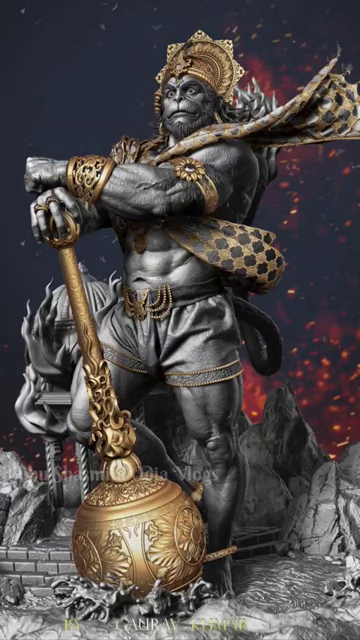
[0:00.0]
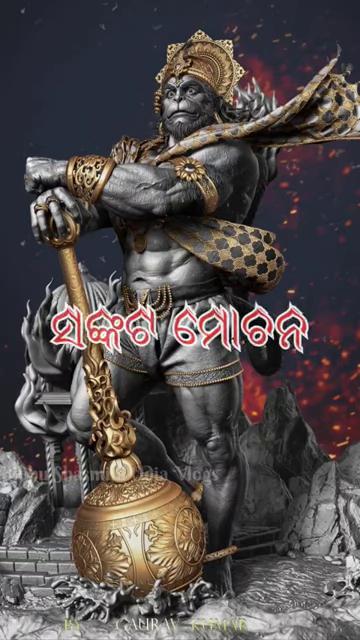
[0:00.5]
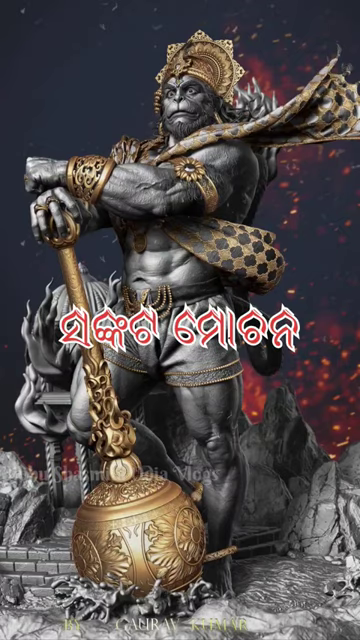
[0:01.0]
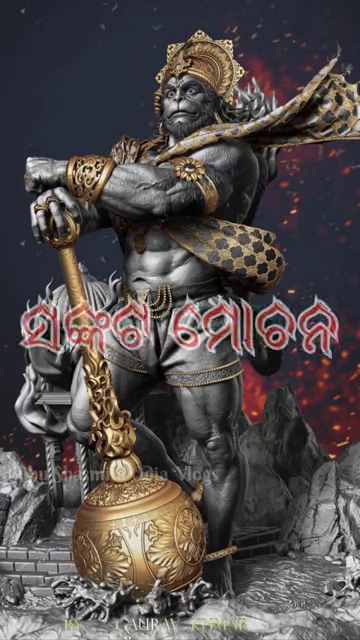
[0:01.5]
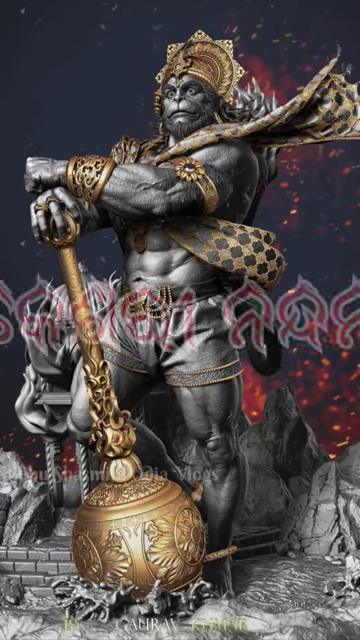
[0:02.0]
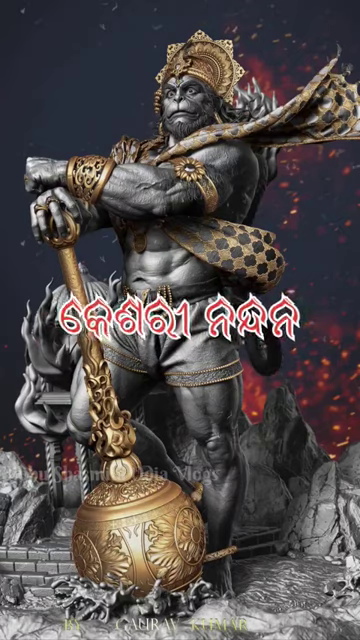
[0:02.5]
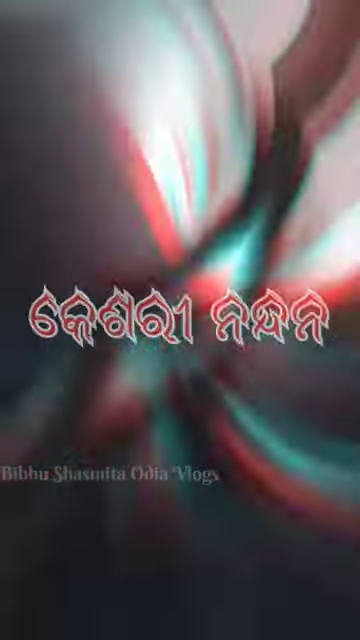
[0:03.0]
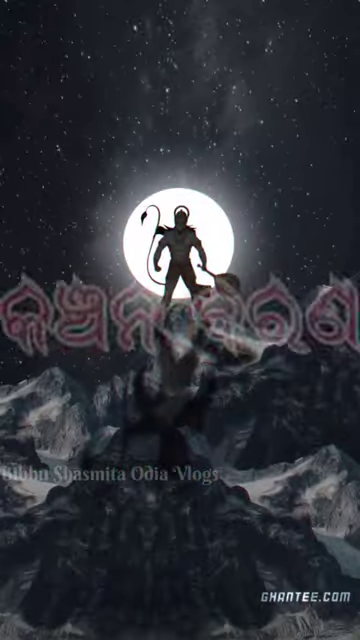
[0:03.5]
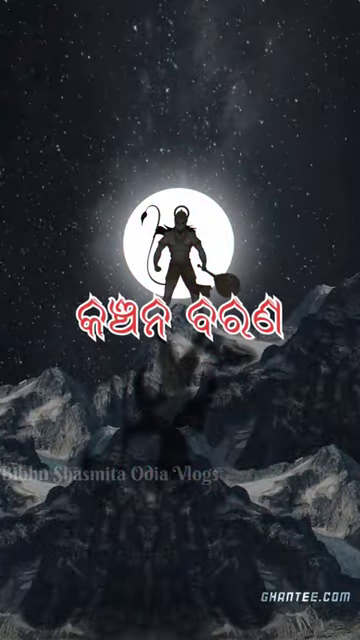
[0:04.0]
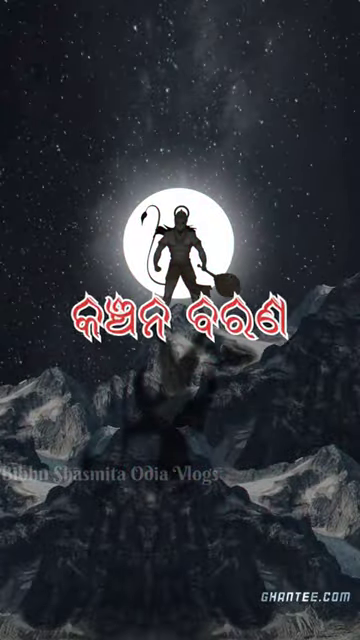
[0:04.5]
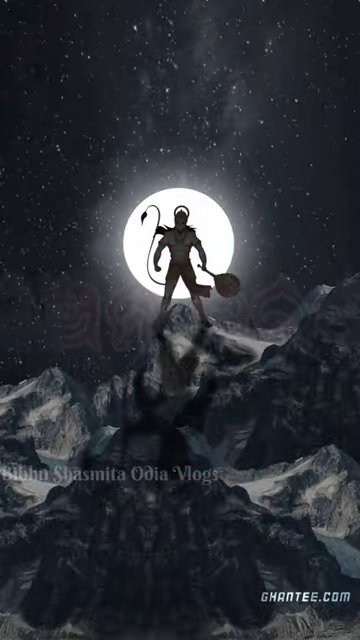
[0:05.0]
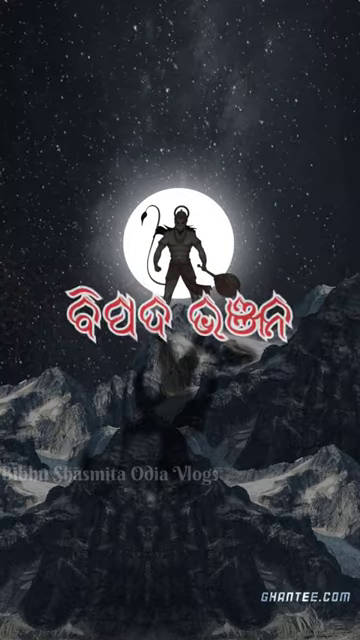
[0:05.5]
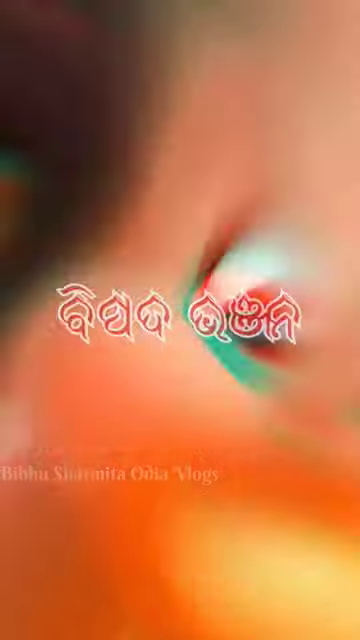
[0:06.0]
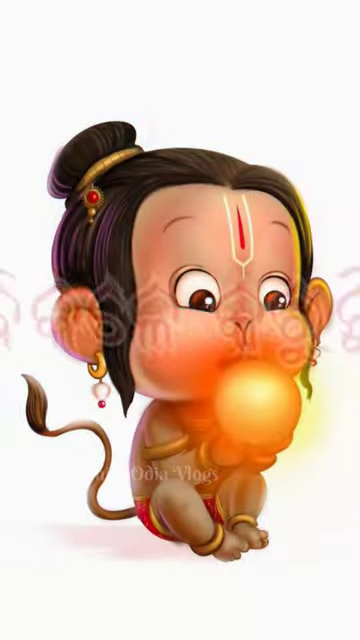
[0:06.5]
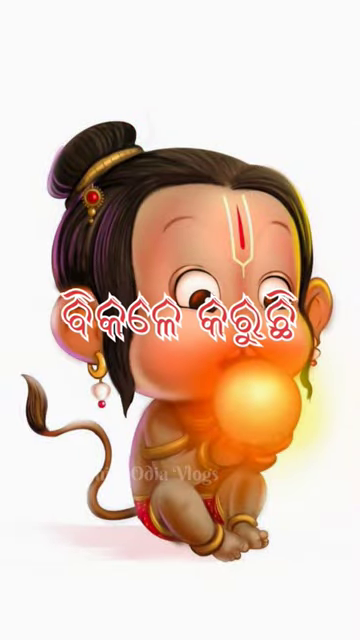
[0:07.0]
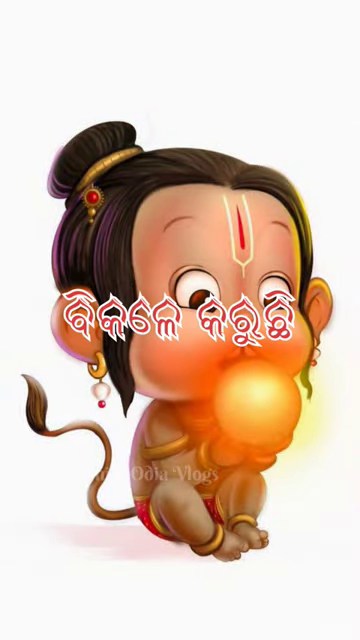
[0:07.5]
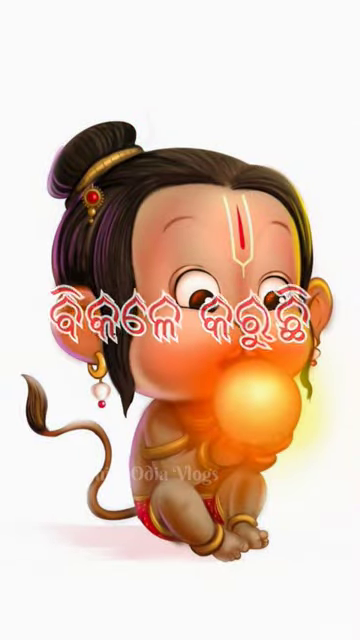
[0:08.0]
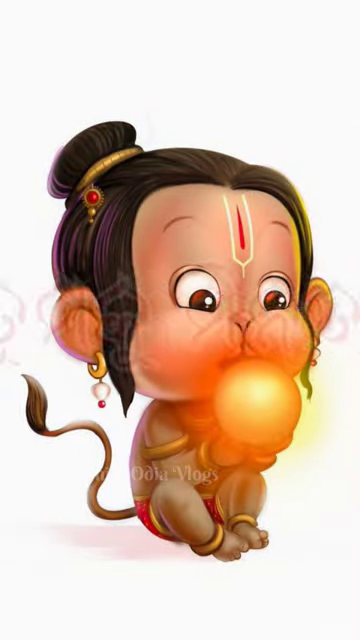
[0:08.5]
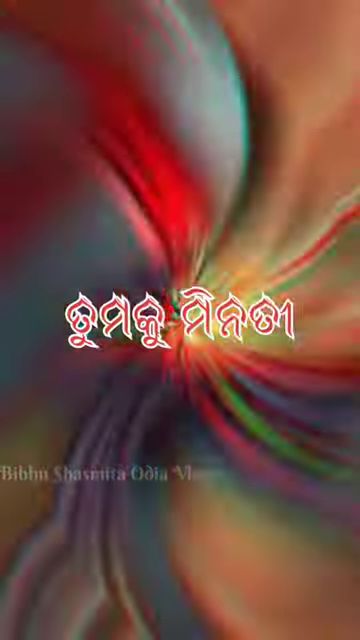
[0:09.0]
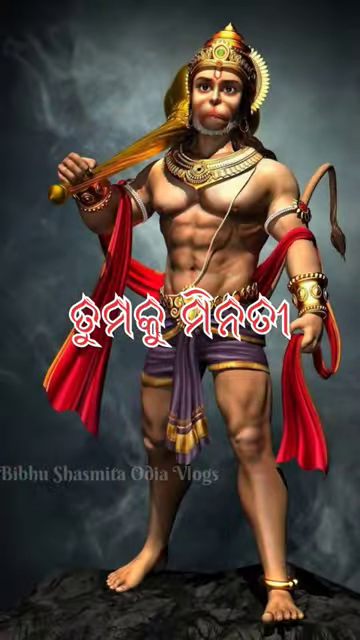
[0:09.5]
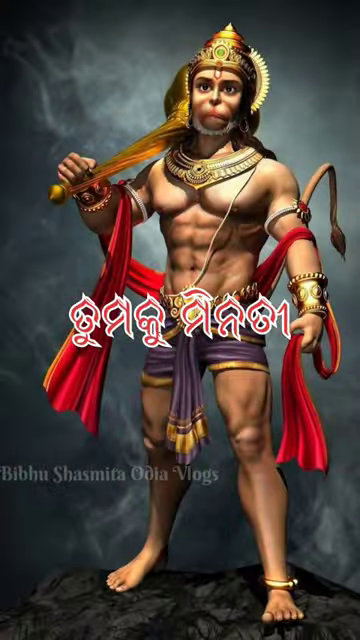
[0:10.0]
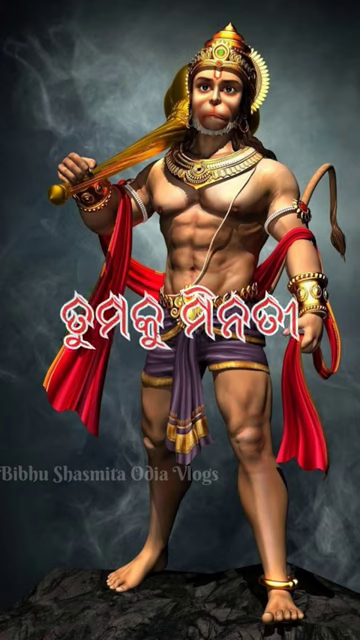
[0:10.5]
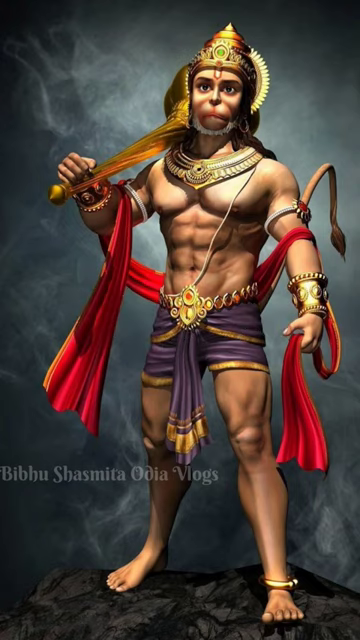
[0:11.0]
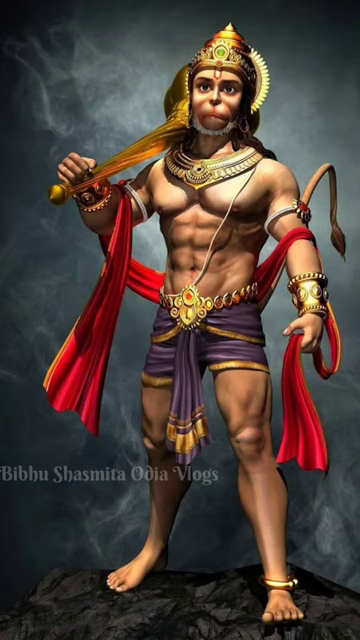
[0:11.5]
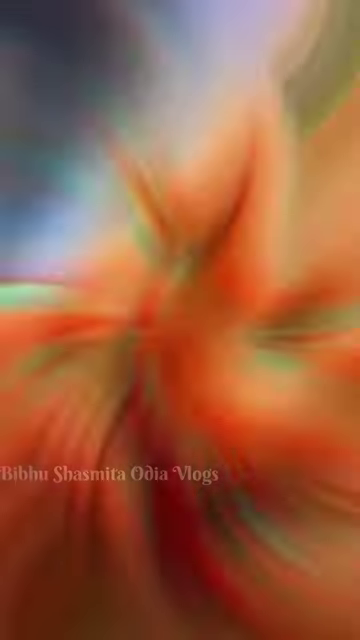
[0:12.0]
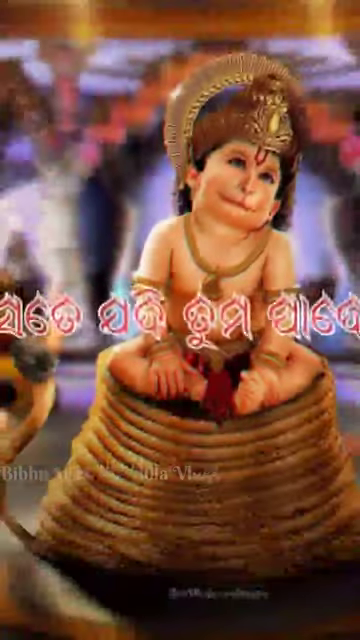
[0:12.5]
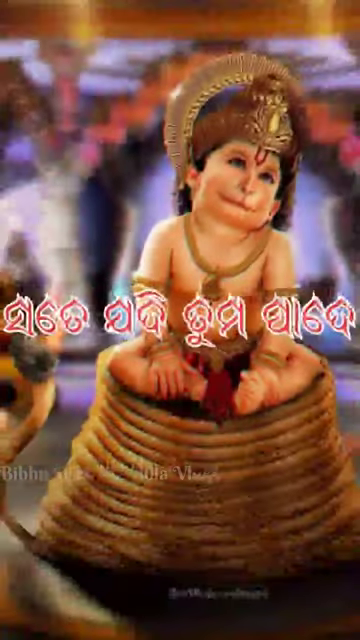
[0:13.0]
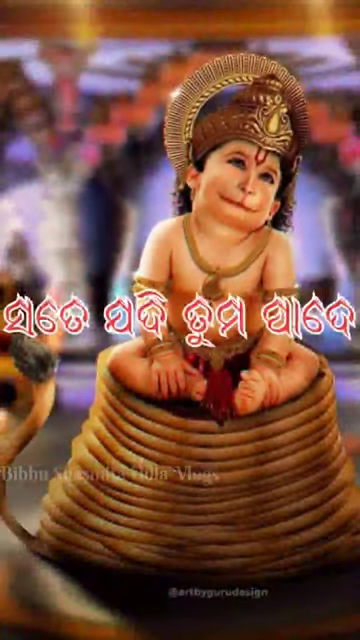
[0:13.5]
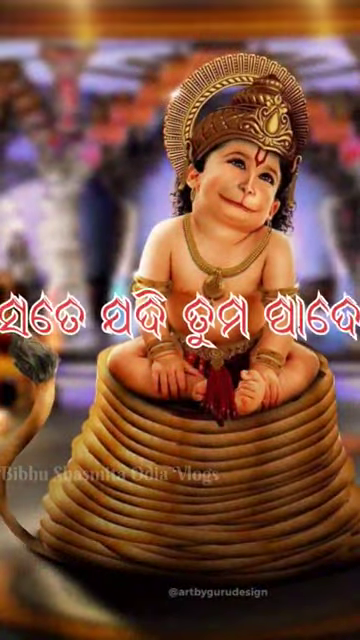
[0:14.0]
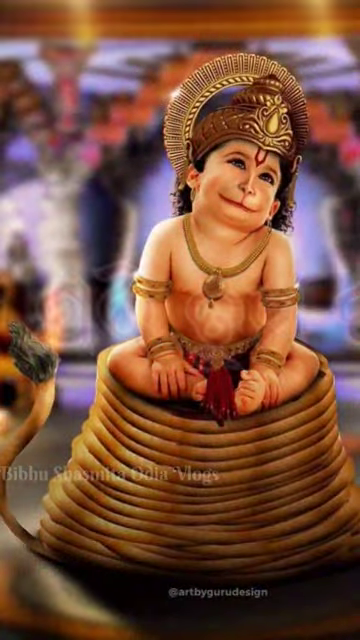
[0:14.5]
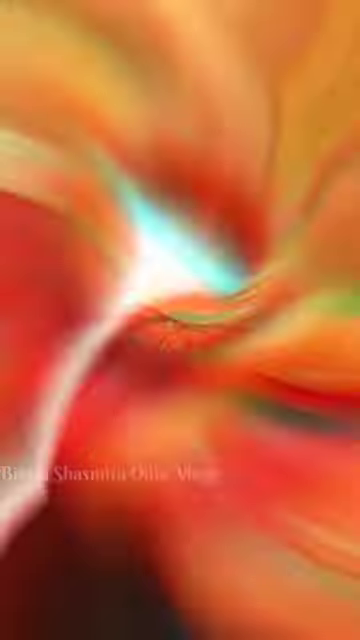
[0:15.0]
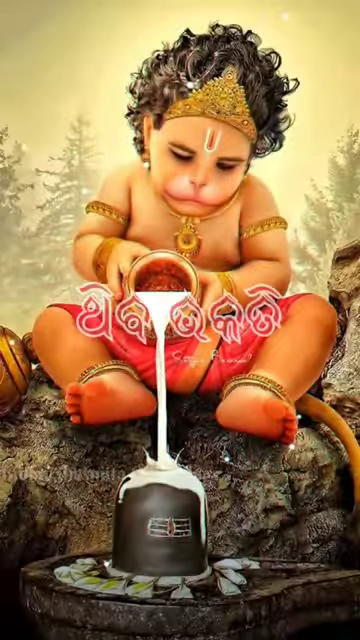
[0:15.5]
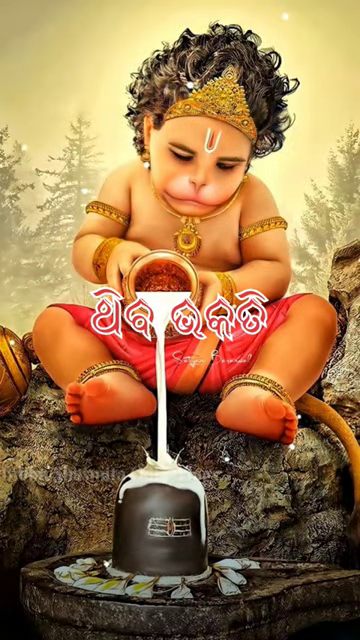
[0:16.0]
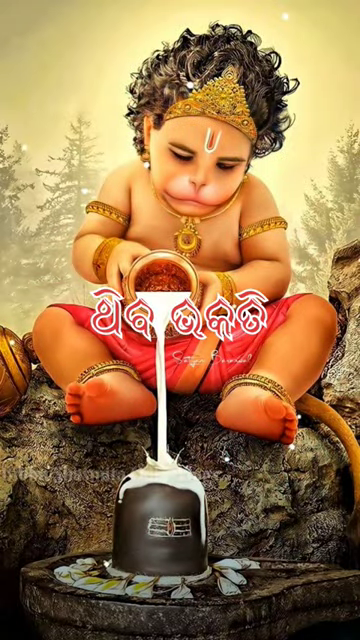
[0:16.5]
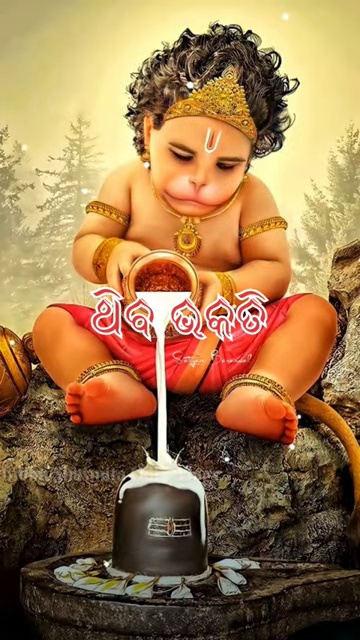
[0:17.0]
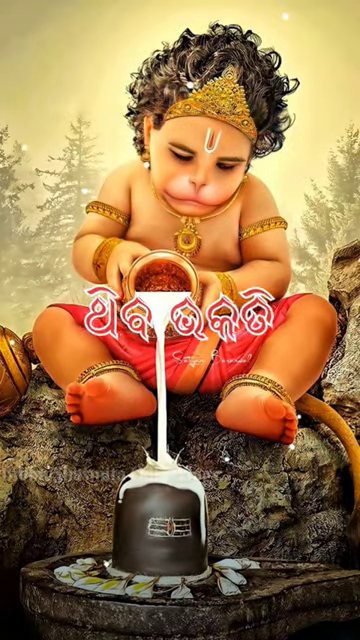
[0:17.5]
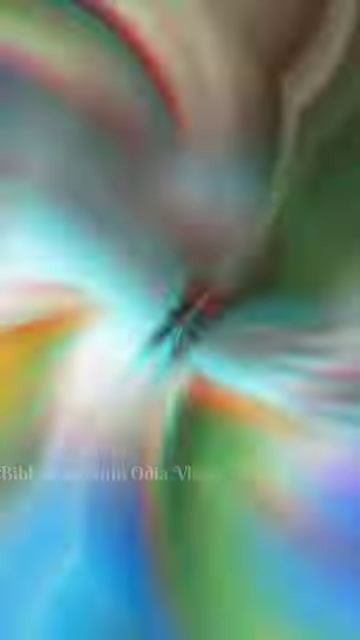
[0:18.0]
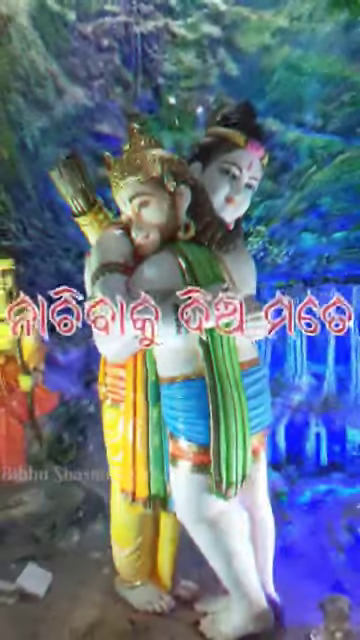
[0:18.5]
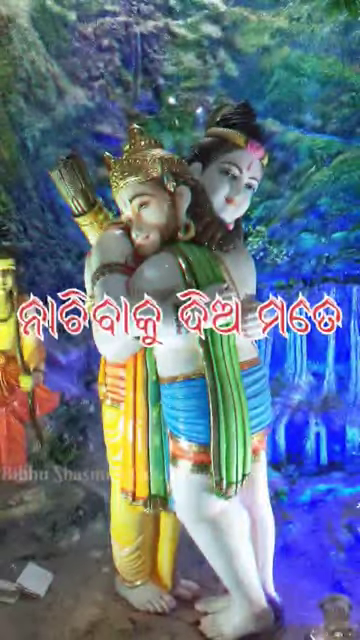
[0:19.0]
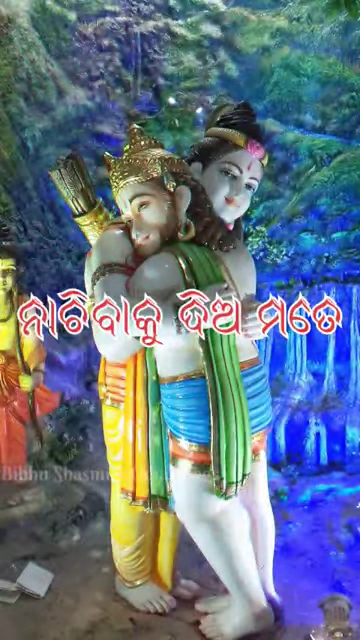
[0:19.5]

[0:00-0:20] Red and white foreign letters keep popping in and out of the screen, almost like a zoom in and out animation, while the background changes between different pictures. When the pictures change, they tend to rotate to the left. Each picture is unique but shares a theme of different kinds of human-like figures: some look more like men, others look like babies, and others look like women. Each image has a different background. The first two have a dark black background, the third a white background, and the fourth a very dark gray, moon-colored background. The next has a blurred background of red, purple and brown that looks like some kind of arch structure. The one after that looks like it is in a forest, with a yellow background and black trees. The next shows blue and green, almost like a cave.